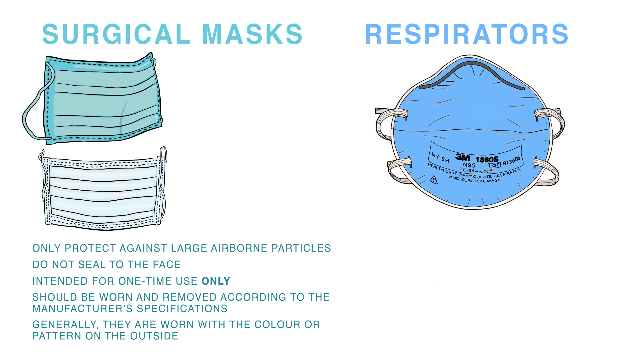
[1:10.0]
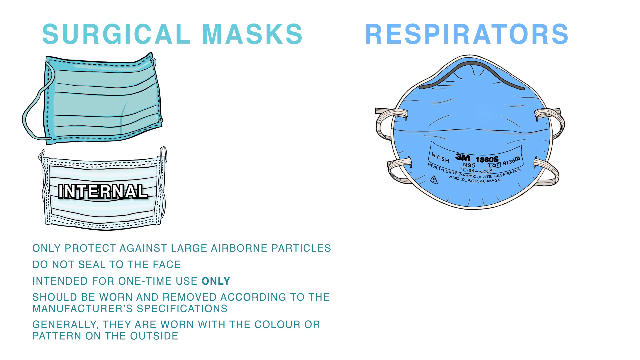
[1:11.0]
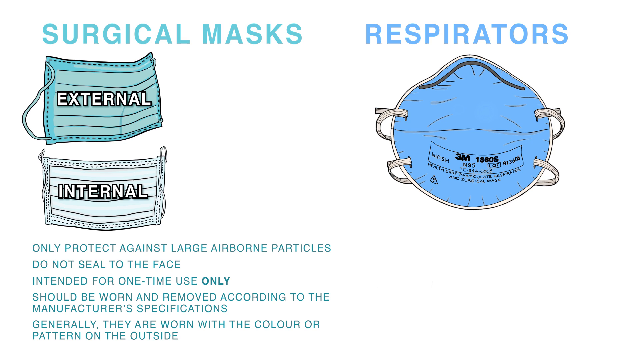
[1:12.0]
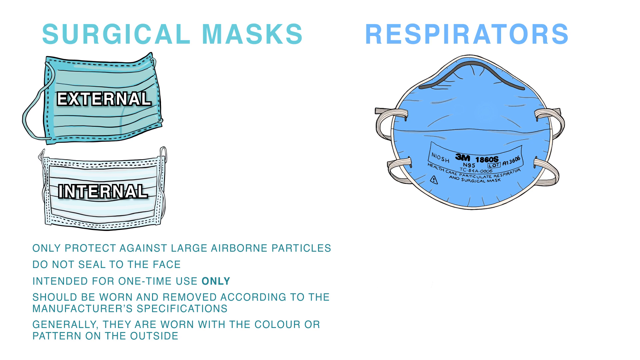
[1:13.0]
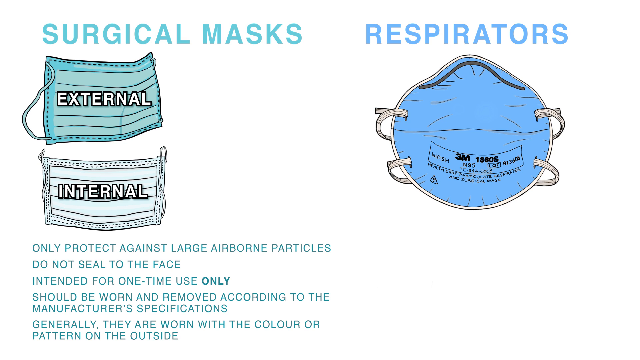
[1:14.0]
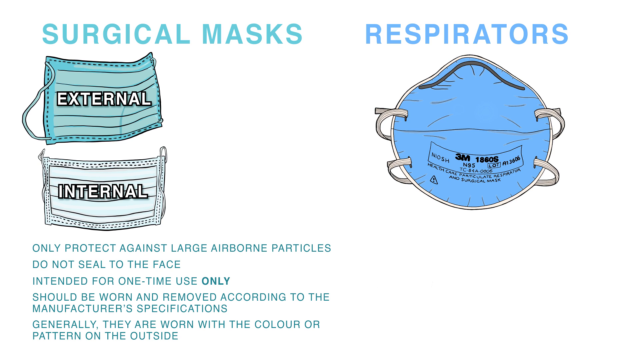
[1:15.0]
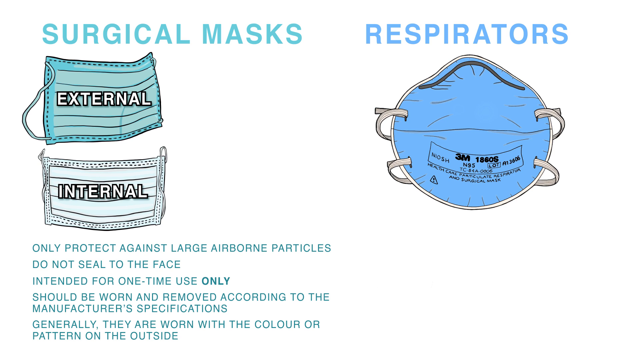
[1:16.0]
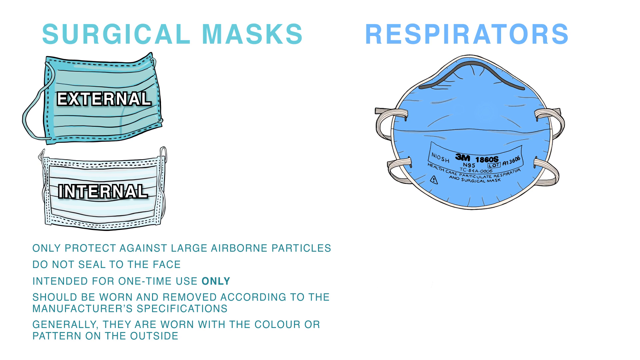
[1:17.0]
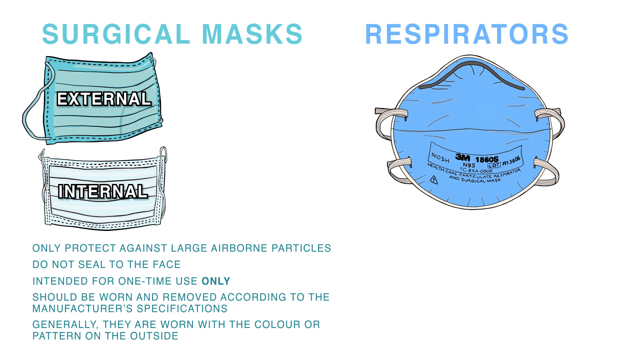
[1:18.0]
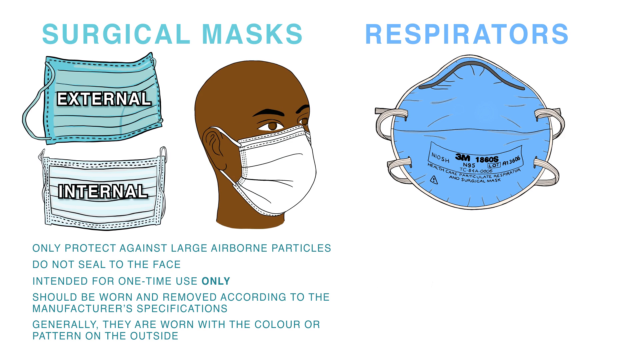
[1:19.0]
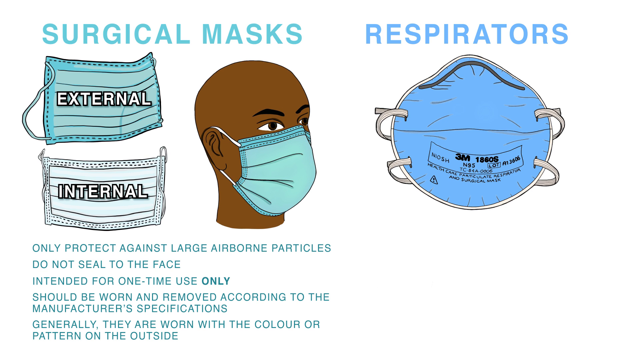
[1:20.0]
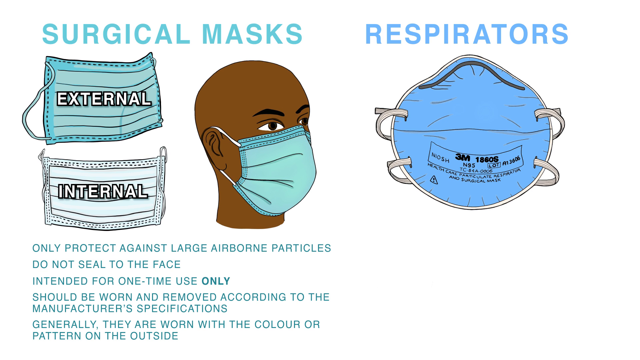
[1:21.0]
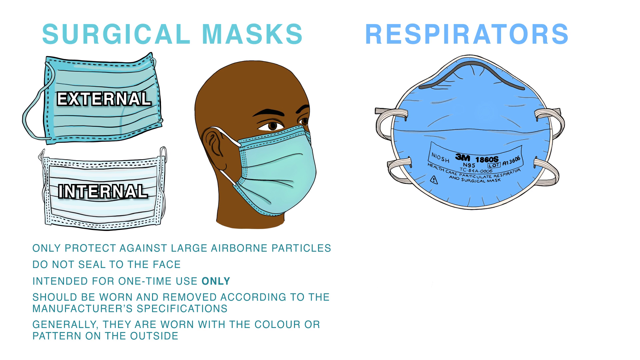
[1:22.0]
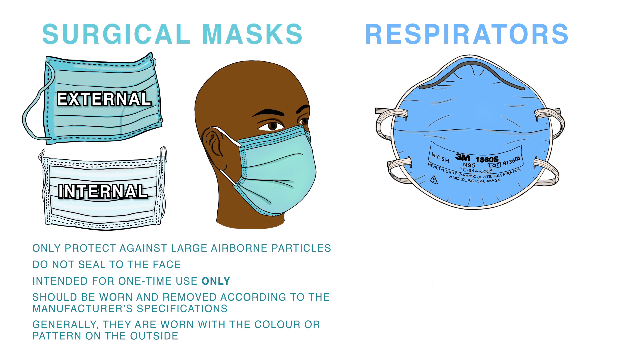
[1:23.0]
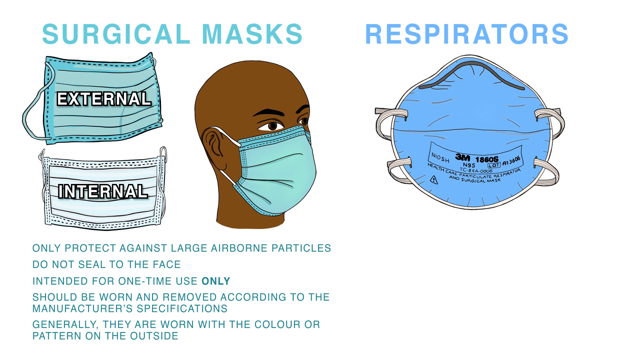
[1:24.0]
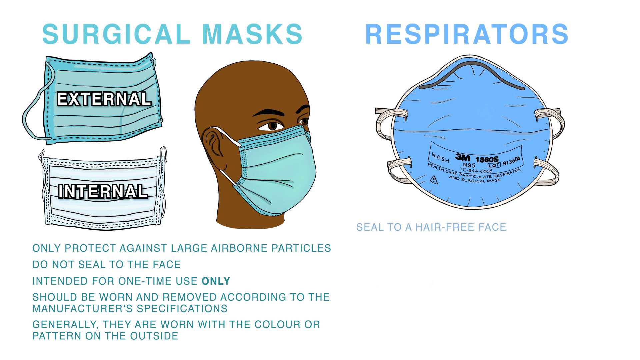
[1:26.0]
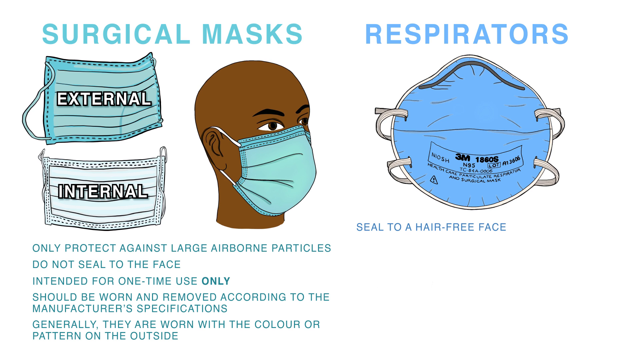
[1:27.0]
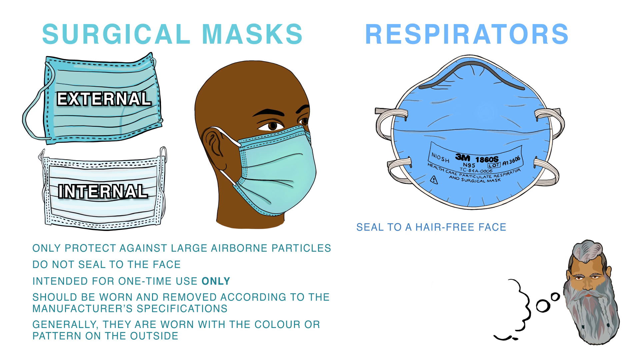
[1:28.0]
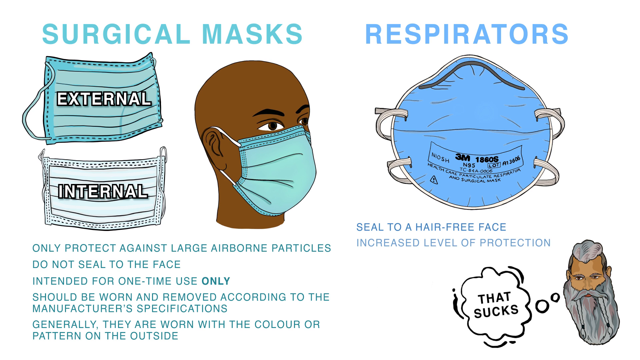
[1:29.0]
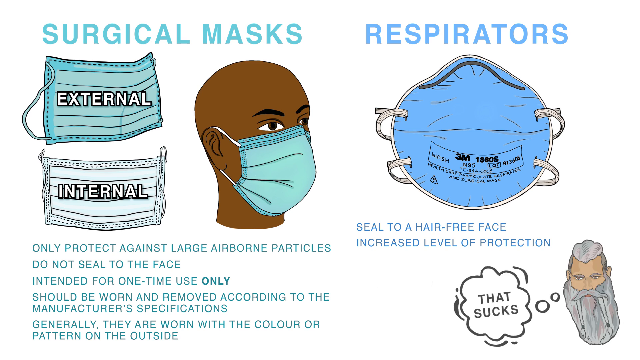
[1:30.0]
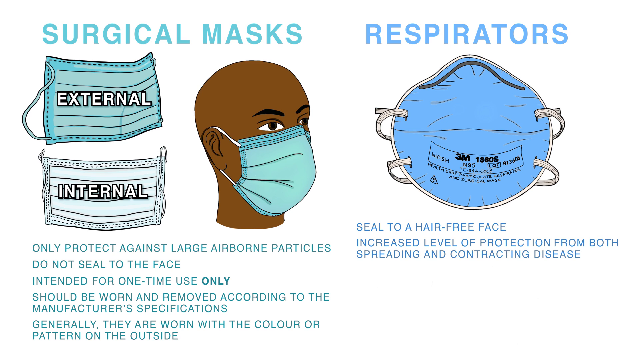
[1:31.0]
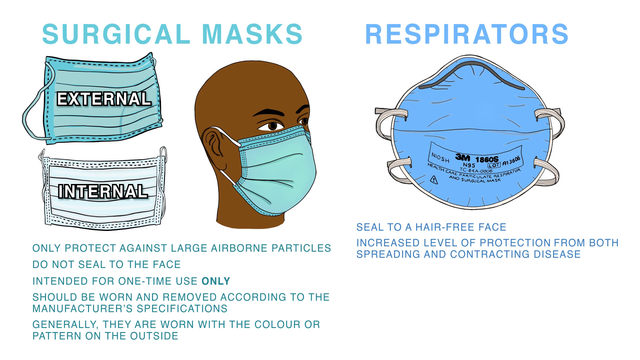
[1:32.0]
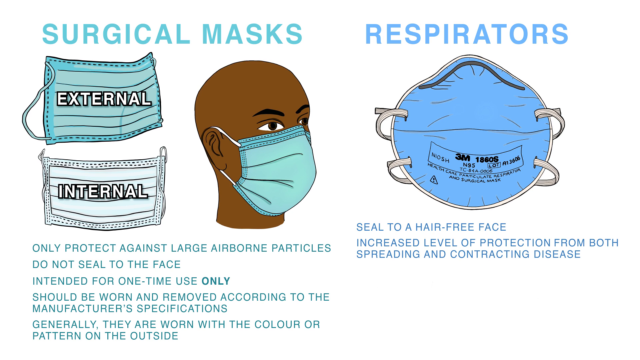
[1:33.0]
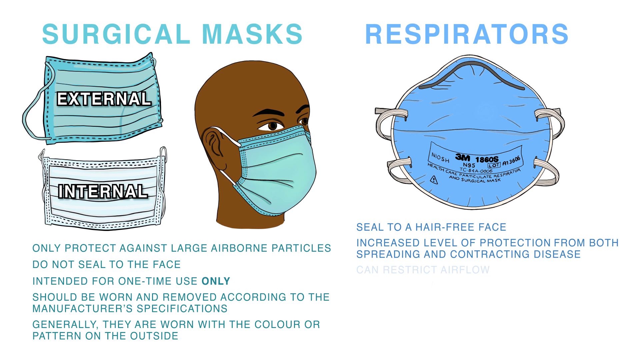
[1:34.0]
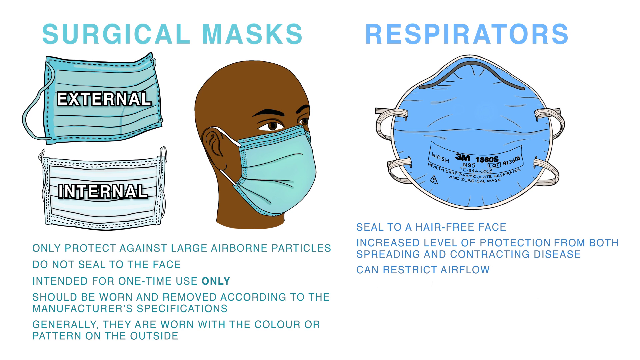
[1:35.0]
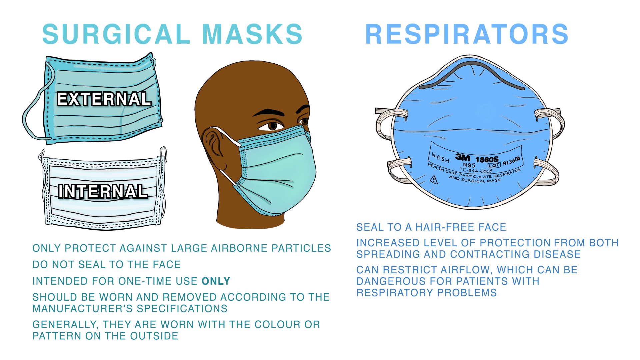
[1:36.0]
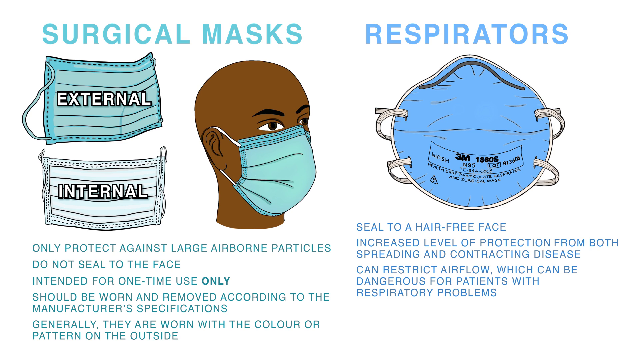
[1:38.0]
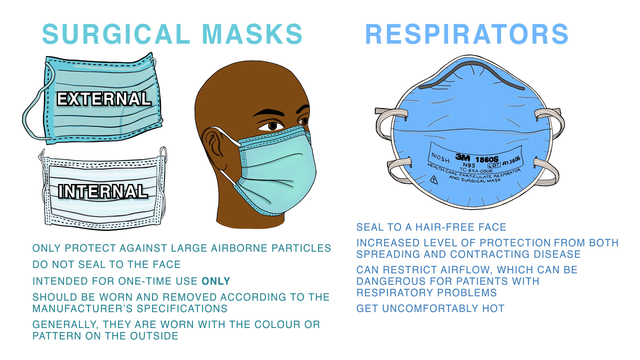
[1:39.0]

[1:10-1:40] On a white screen are images of two surgical masks and one respirator, with text about what the masks protect against and how often they should be used. There is an image of a person with brown skin and a bald head wearing a surgical mask that hangs around their ears, and an image of a person wearing a disposable respirator. The text below the surgical masks reads "only protect against large airborne particles. Do not seal to the face. Intended for one-time use only. Should be worn and removed according to the manufacturer's specifications," and also tells how they are generally worn. An image pops up at the bottom of the screen of a man with a very long gray beard and gray hair, with a speech bubble that reads "that sucks".